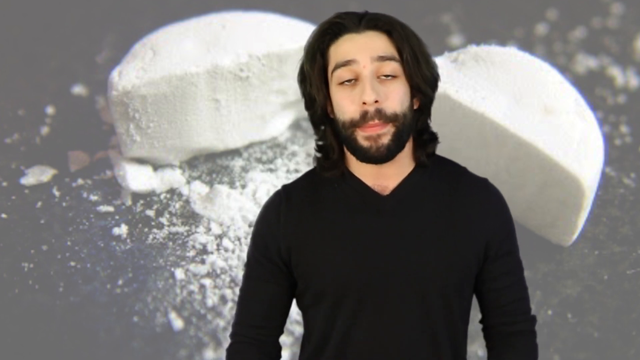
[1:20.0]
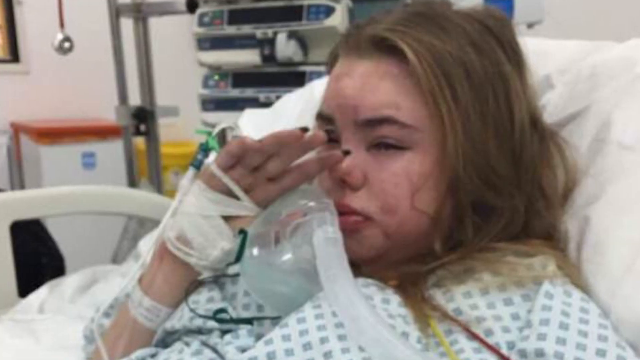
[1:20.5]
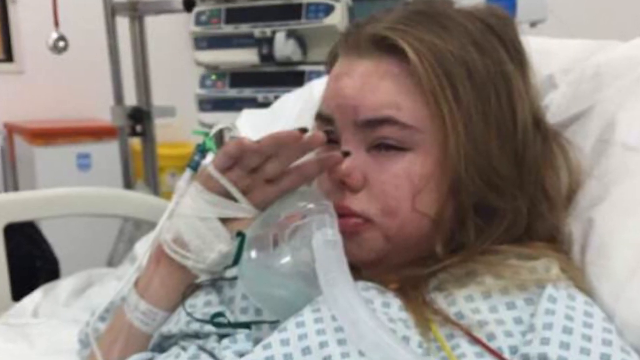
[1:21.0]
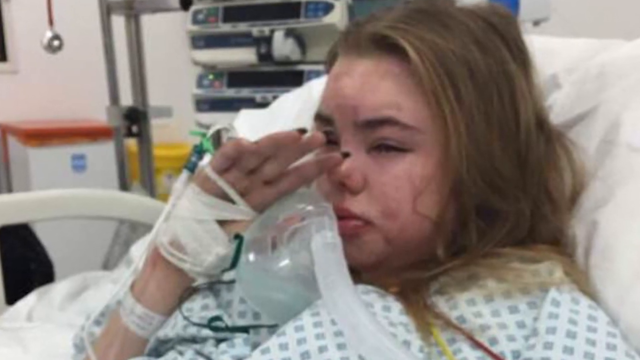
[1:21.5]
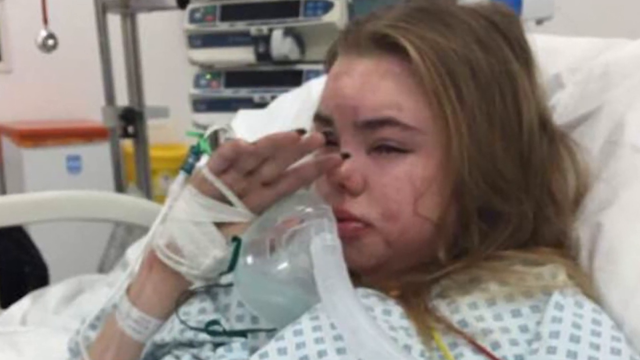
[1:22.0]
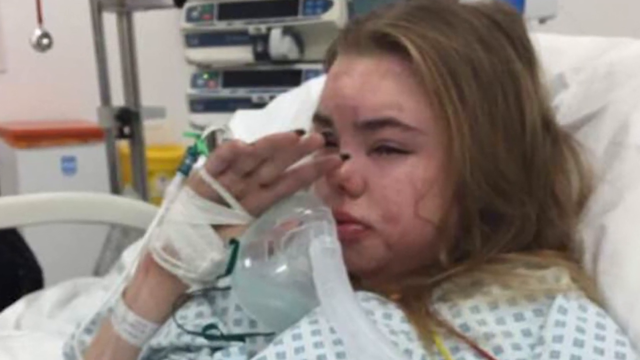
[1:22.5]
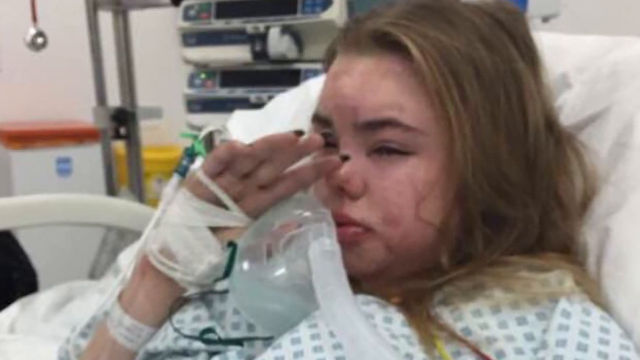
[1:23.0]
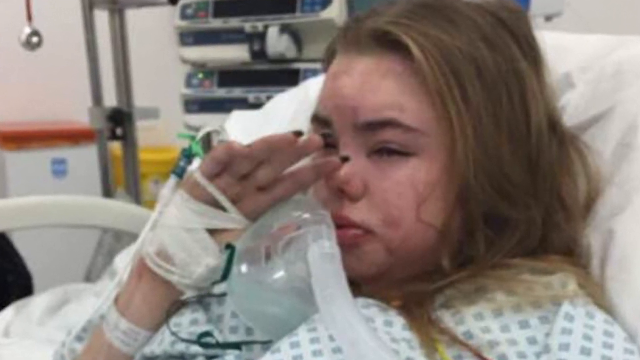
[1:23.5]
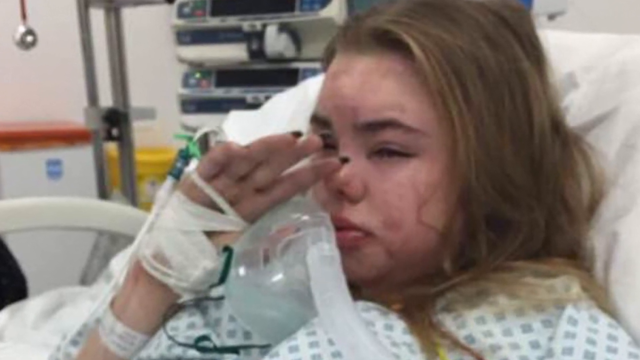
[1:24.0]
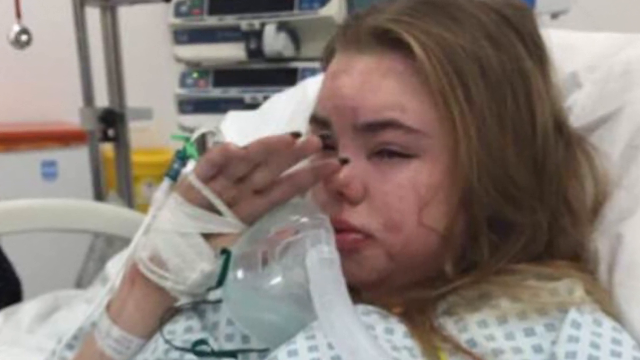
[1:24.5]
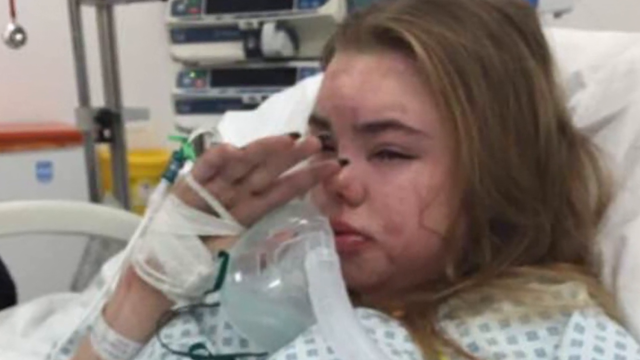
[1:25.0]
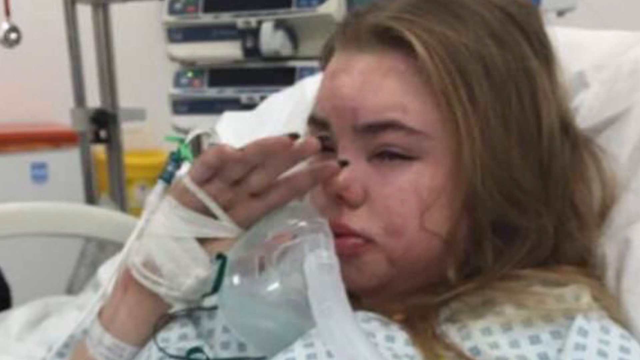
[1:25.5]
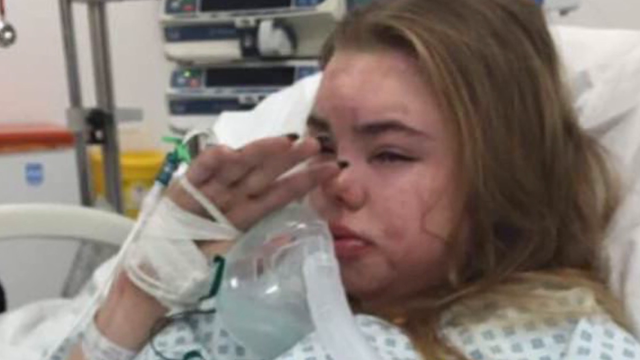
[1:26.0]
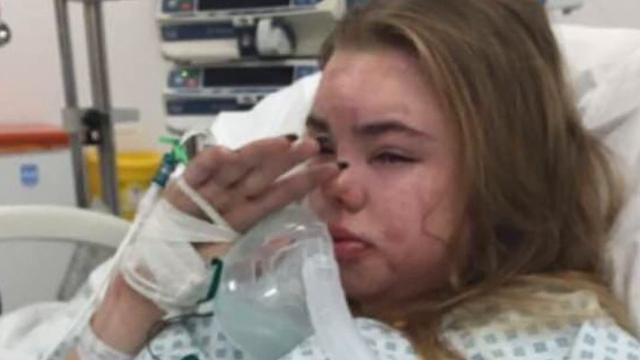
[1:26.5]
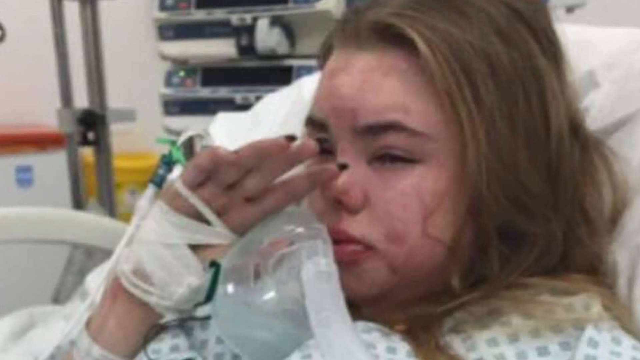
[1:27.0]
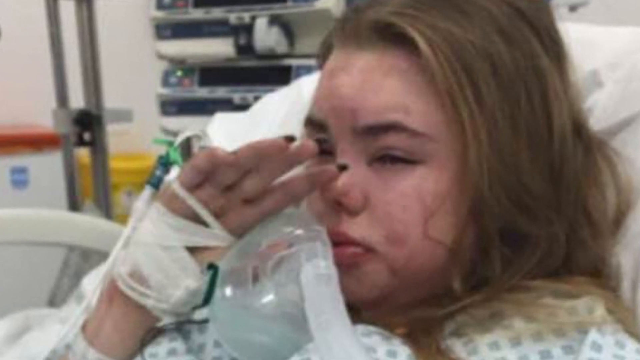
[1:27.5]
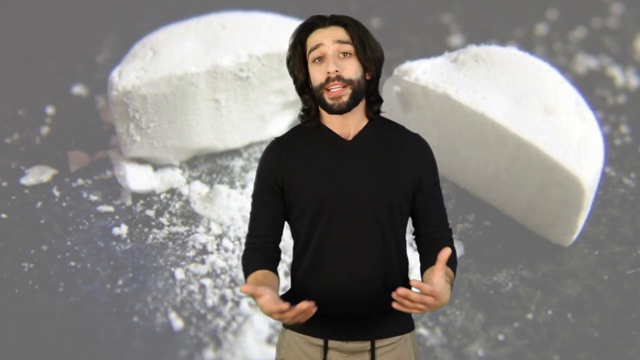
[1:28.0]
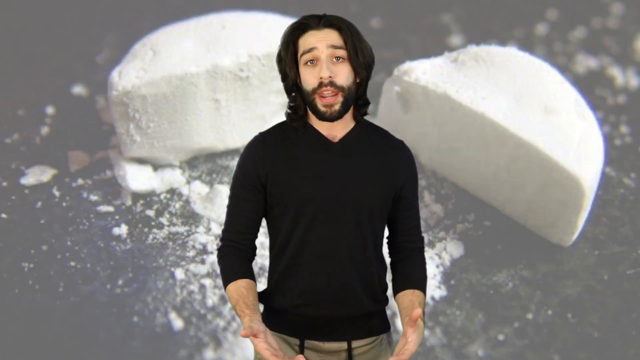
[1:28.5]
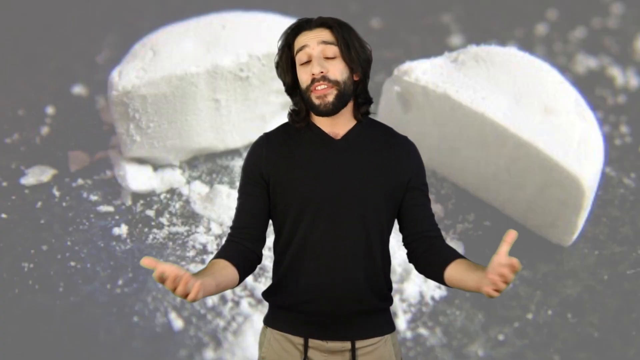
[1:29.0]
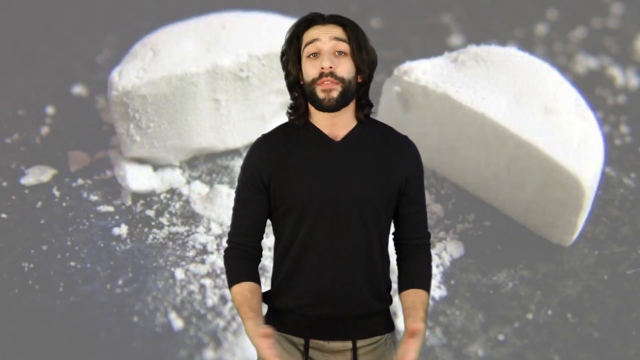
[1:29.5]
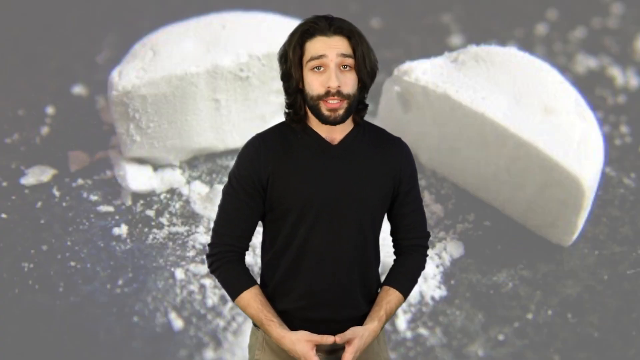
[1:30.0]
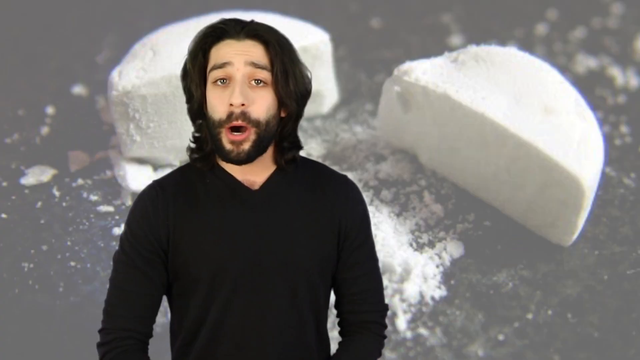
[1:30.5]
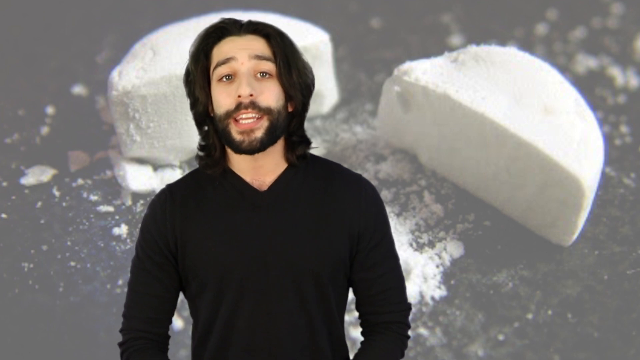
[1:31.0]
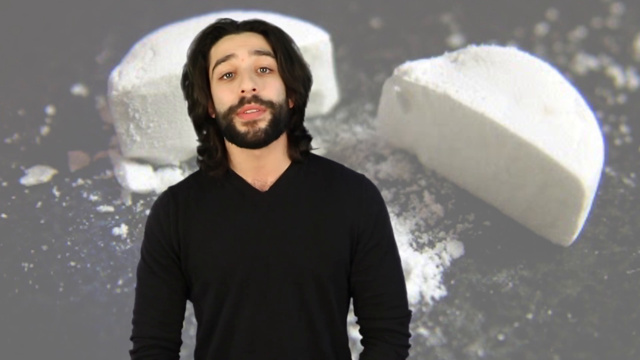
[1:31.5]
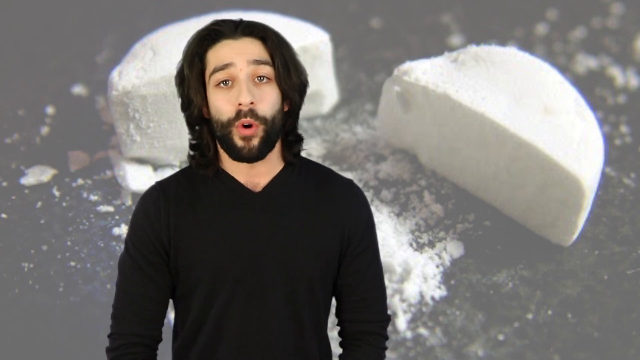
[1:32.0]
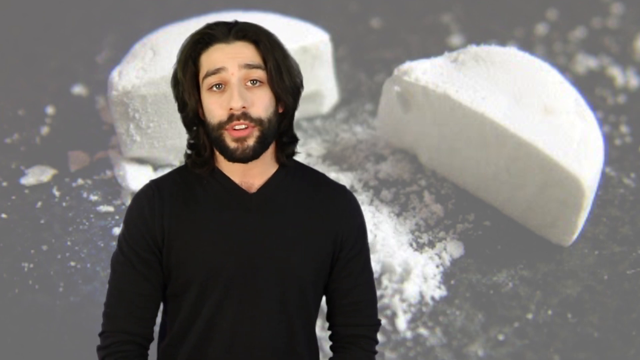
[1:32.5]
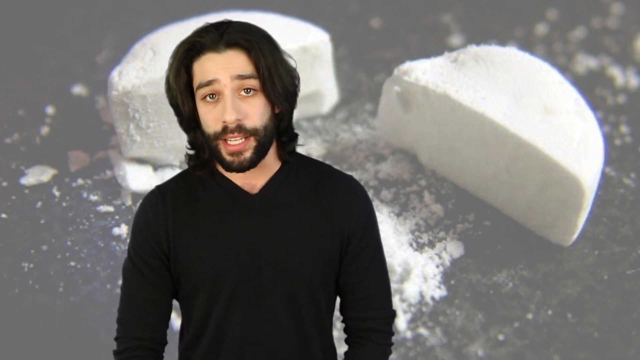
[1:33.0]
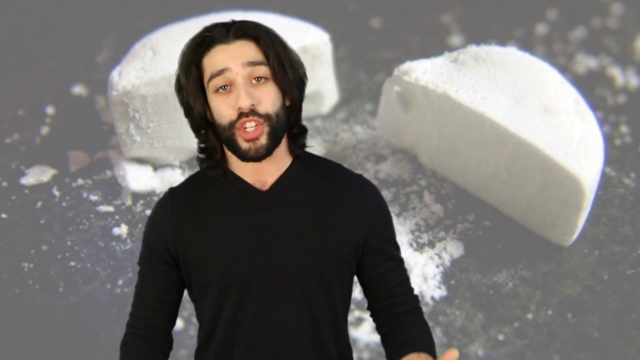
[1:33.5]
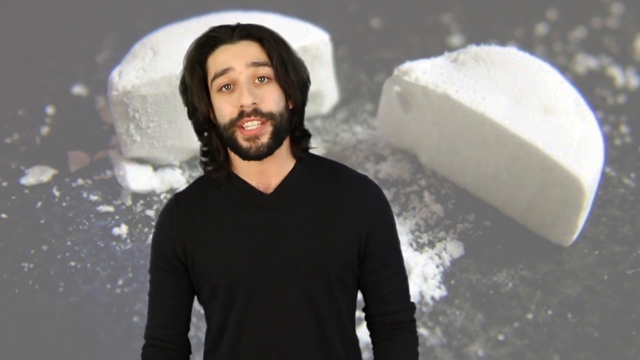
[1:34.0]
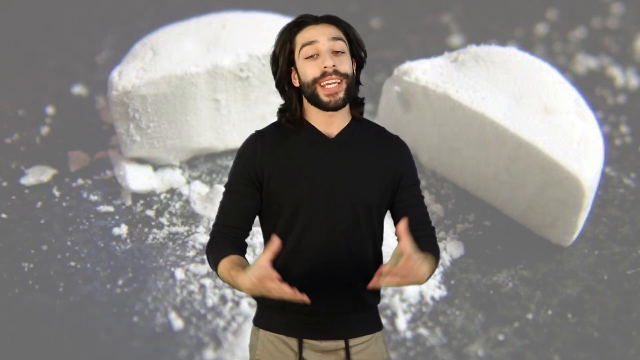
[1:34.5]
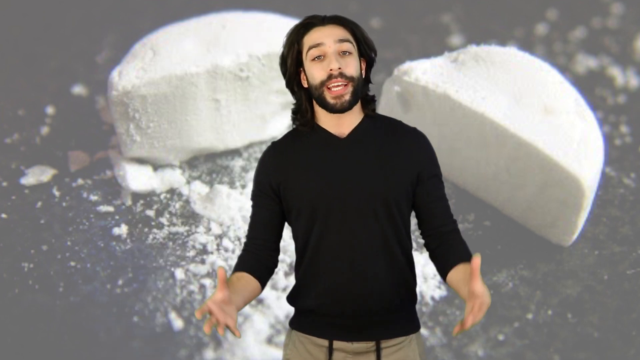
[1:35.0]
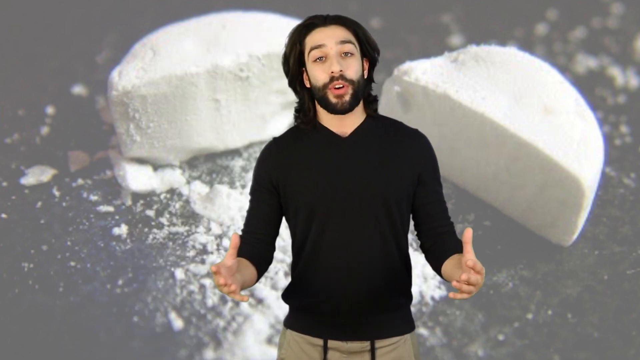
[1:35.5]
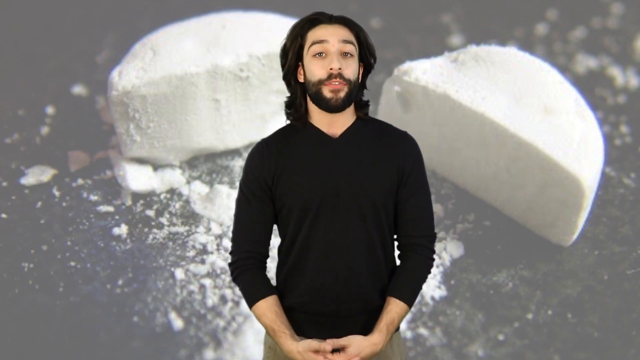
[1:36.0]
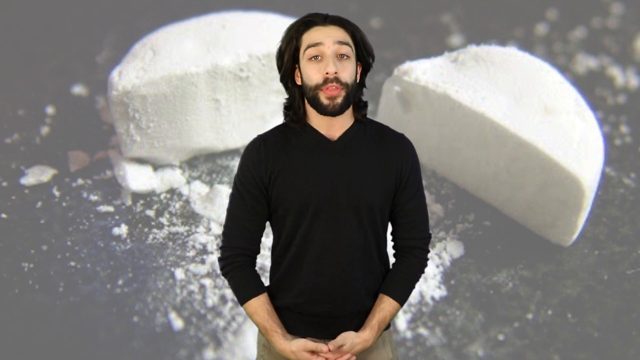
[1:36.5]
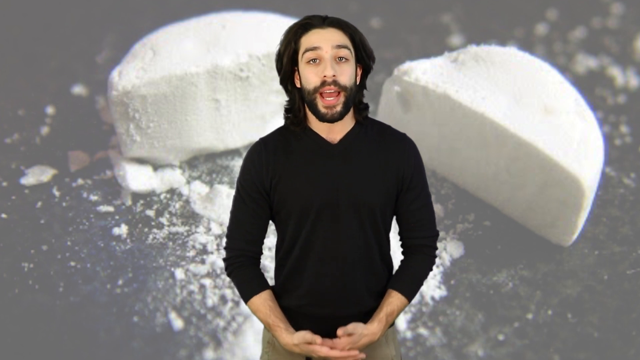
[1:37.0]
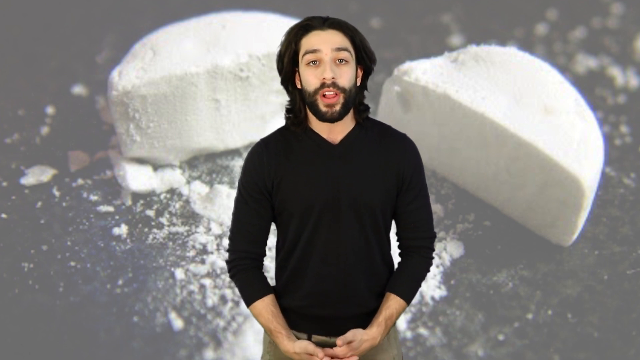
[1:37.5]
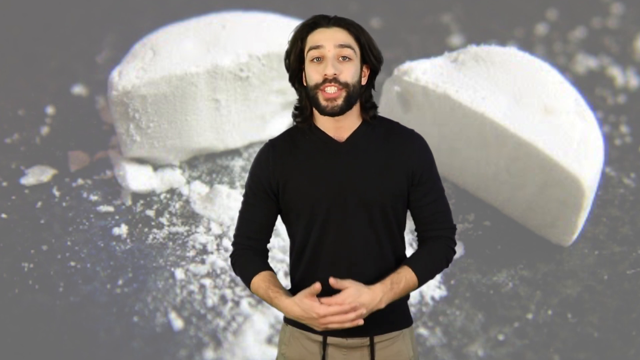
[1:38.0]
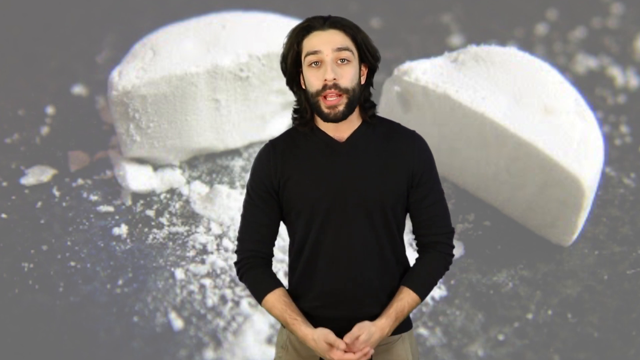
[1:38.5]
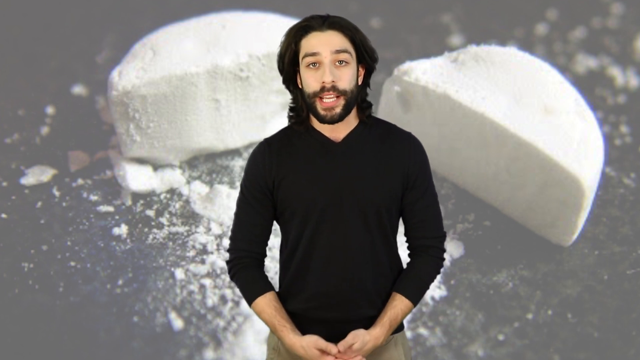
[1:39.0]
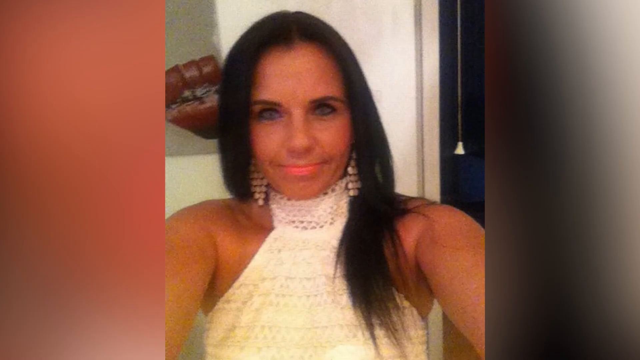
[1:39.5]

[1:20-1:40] A photo of the woman, who looks like she is in very bad condition in the hospital, is slowly zoomed in on, revealing the entire picture. Afterward, another selfie of a woman appears; she does not look like the same woman, but could be.